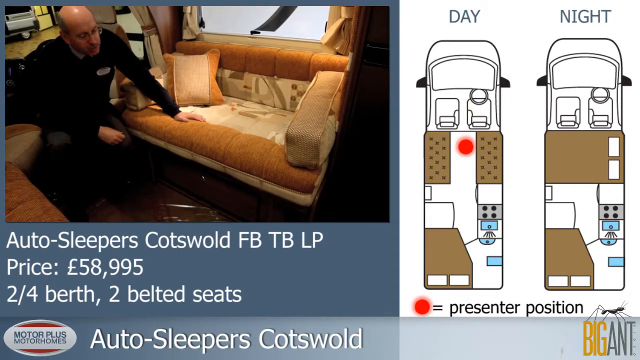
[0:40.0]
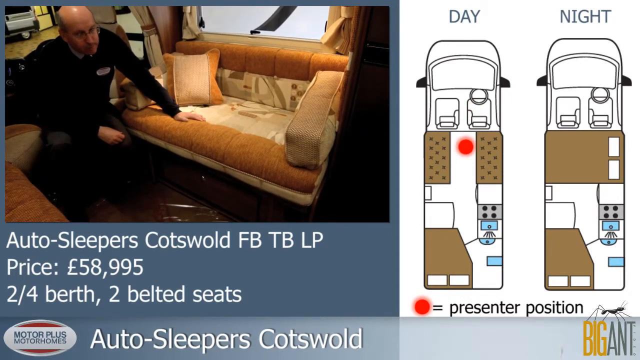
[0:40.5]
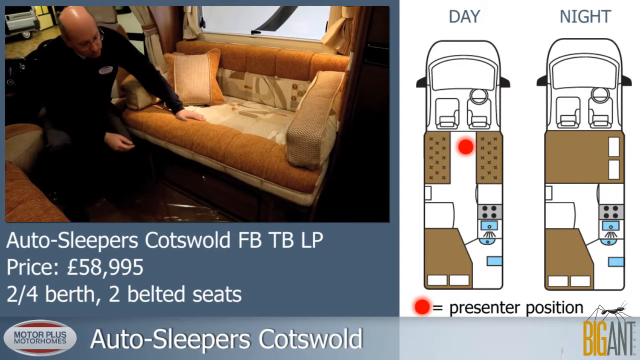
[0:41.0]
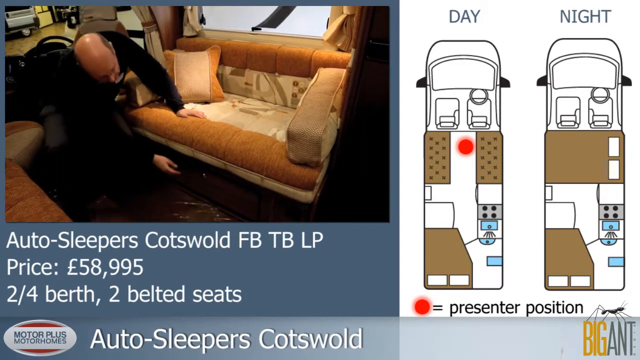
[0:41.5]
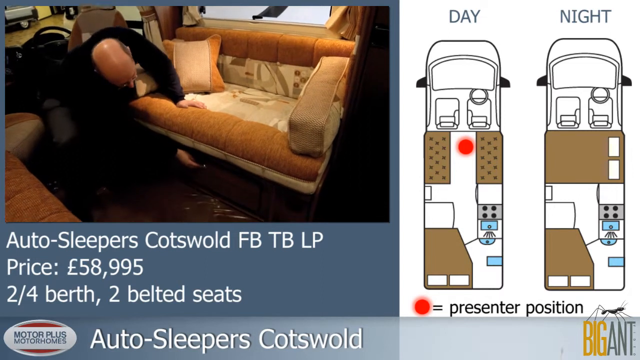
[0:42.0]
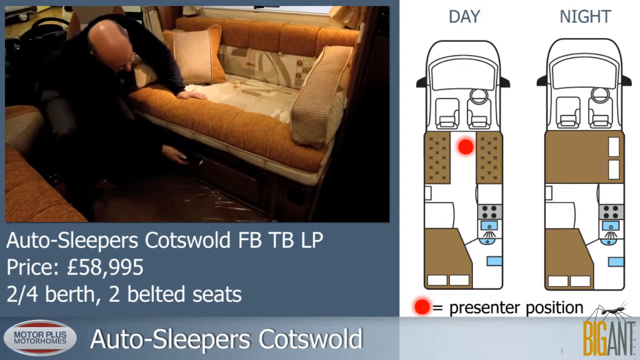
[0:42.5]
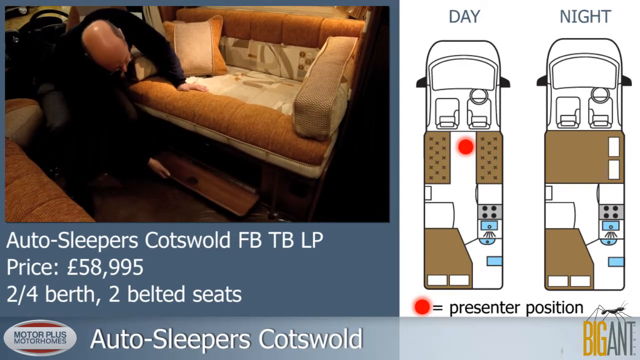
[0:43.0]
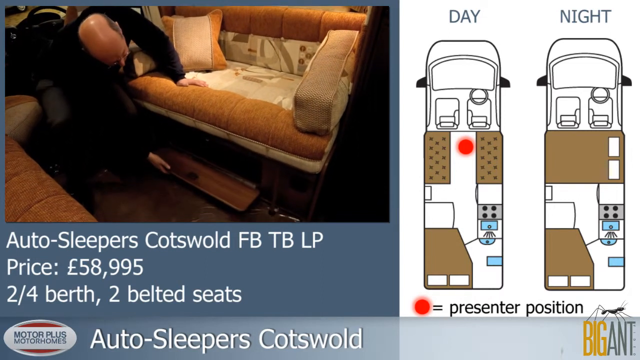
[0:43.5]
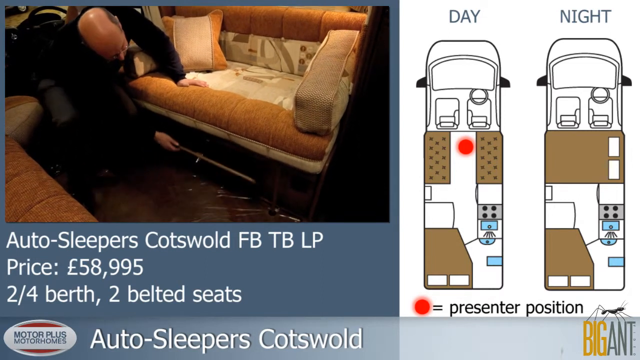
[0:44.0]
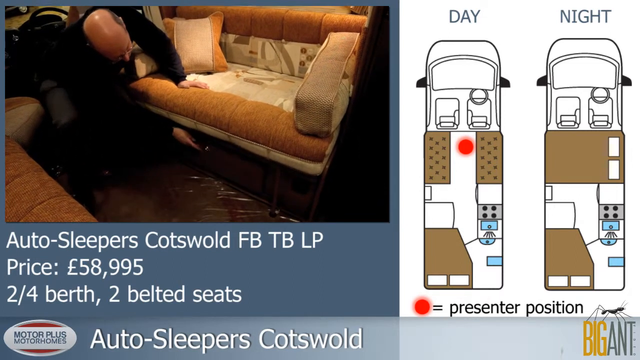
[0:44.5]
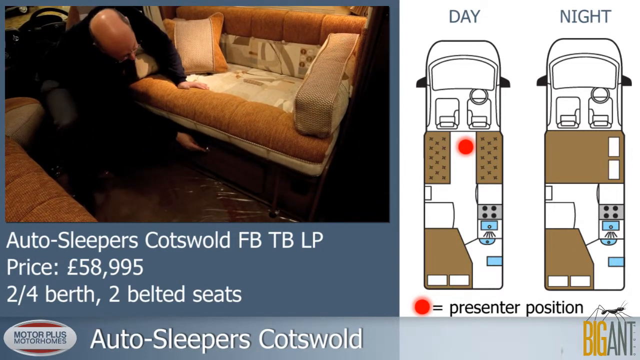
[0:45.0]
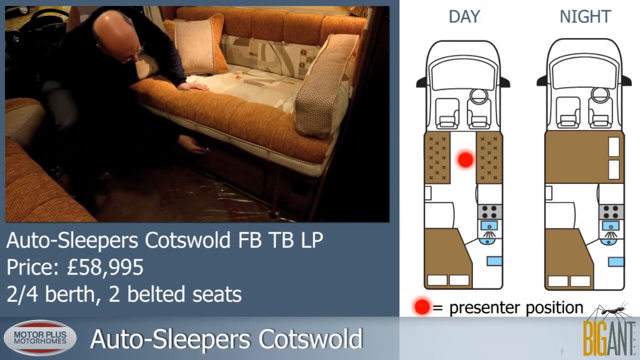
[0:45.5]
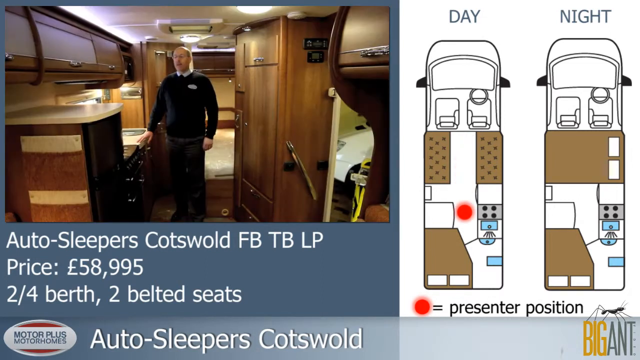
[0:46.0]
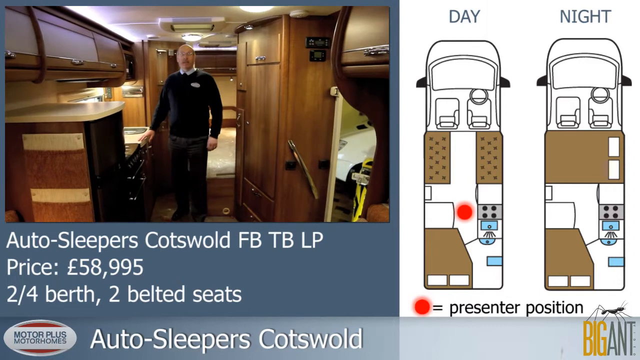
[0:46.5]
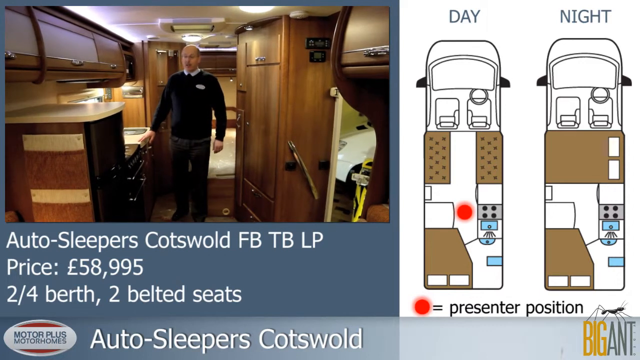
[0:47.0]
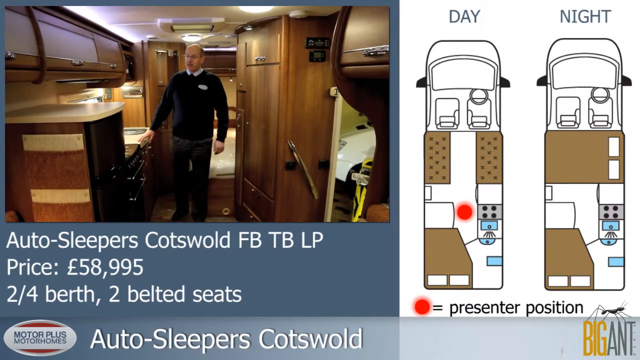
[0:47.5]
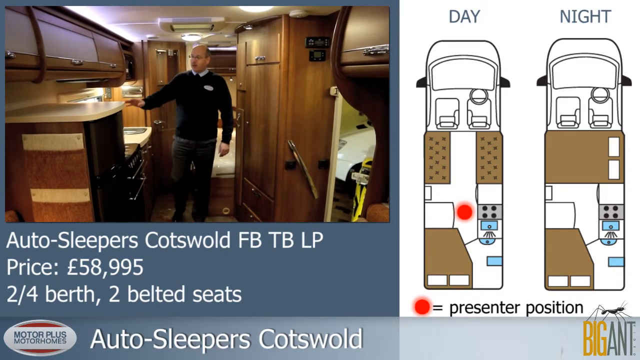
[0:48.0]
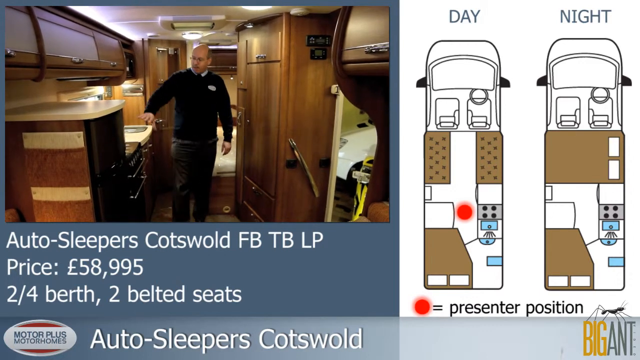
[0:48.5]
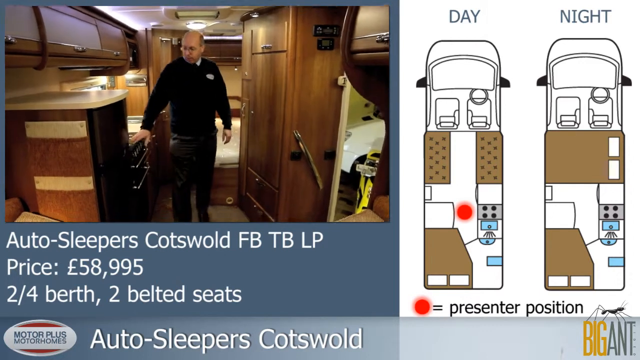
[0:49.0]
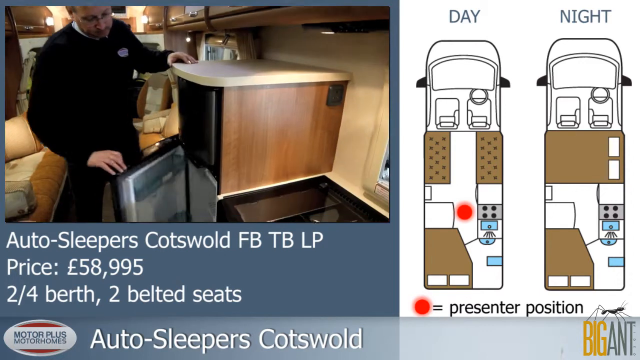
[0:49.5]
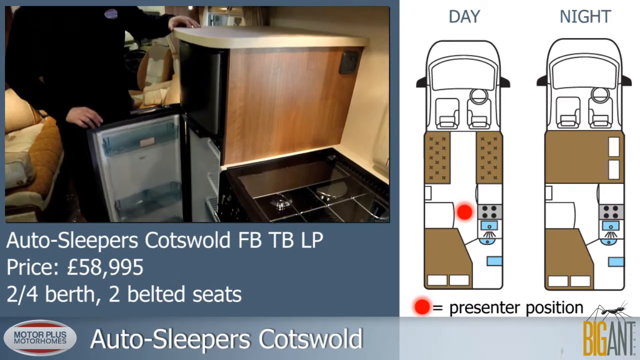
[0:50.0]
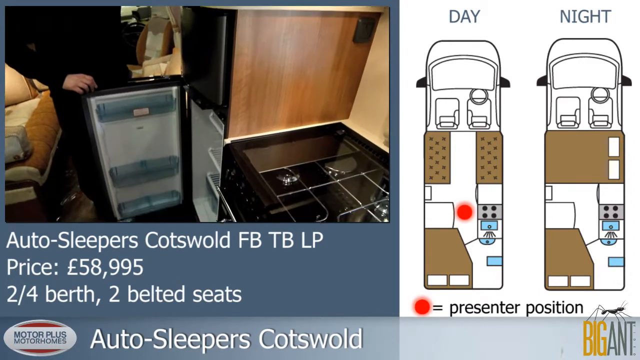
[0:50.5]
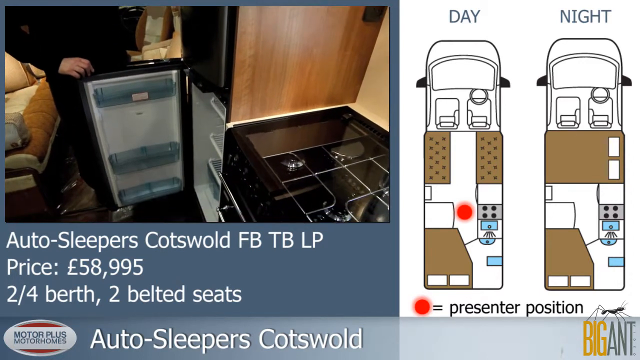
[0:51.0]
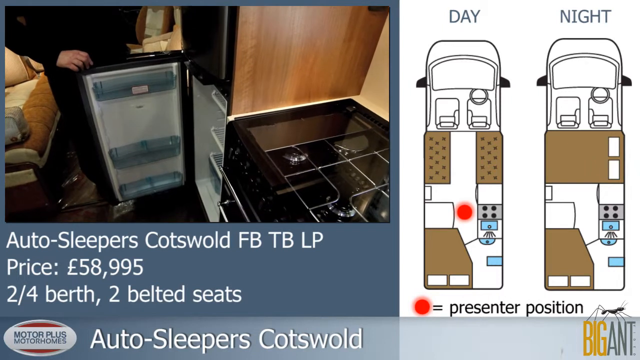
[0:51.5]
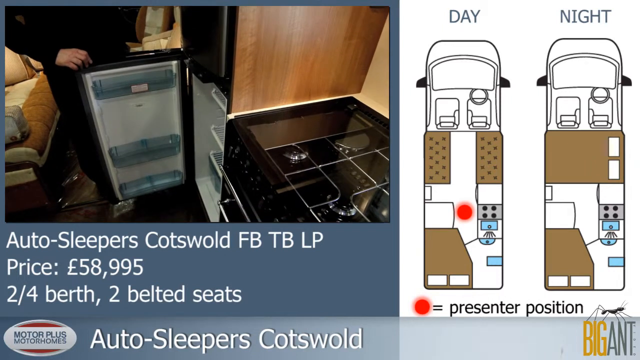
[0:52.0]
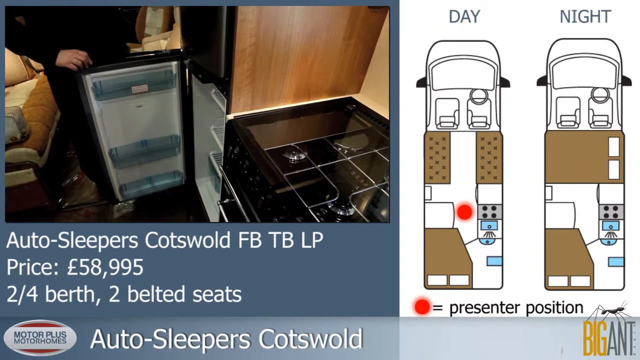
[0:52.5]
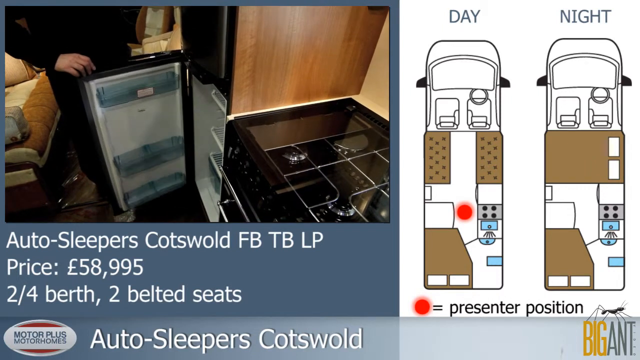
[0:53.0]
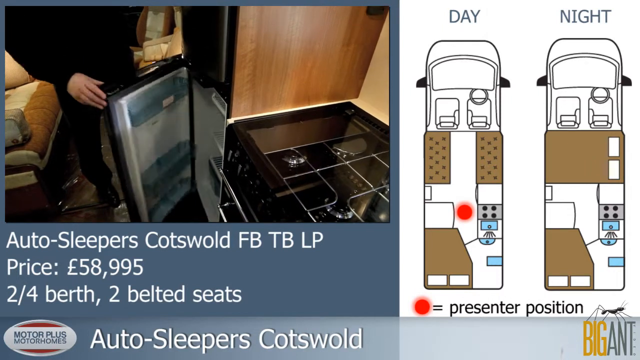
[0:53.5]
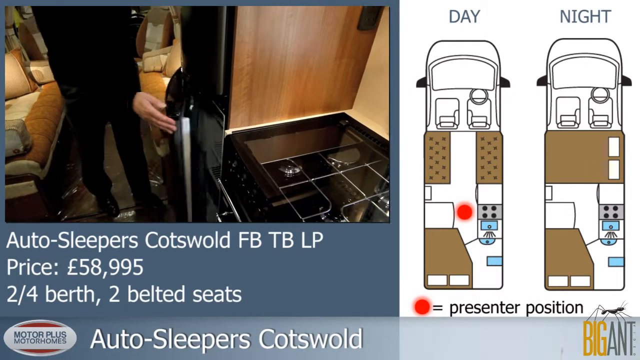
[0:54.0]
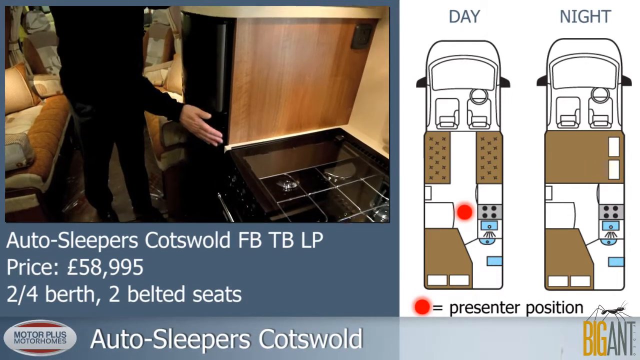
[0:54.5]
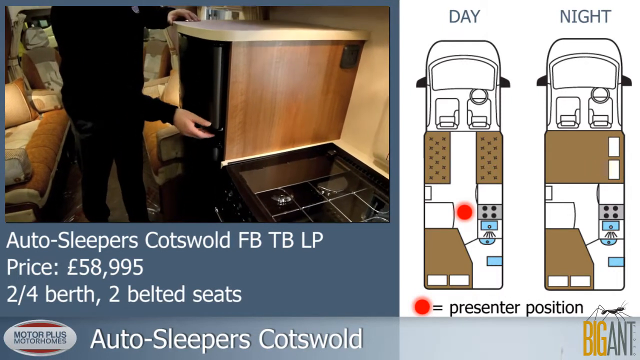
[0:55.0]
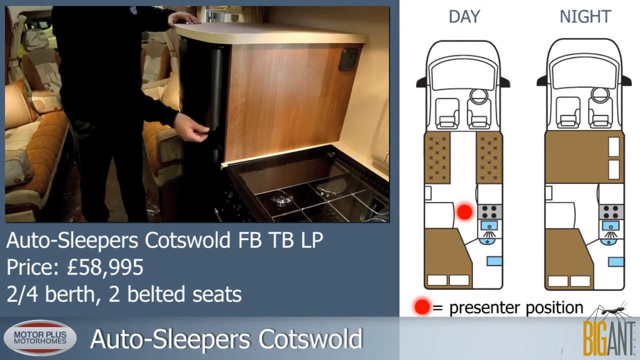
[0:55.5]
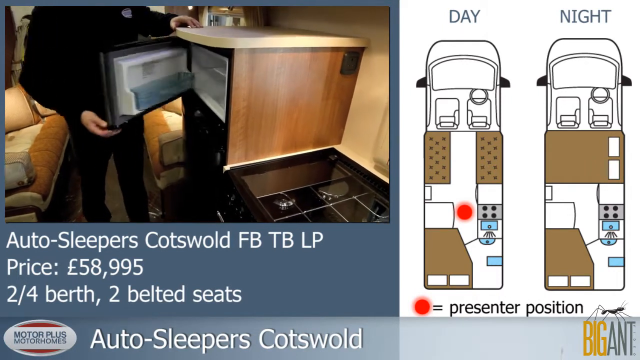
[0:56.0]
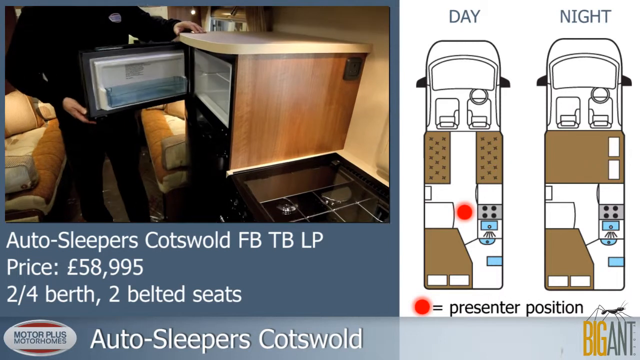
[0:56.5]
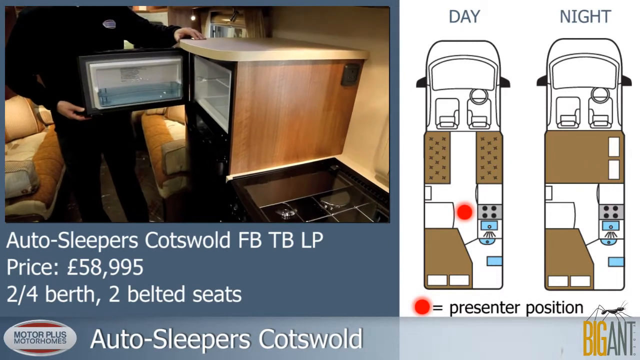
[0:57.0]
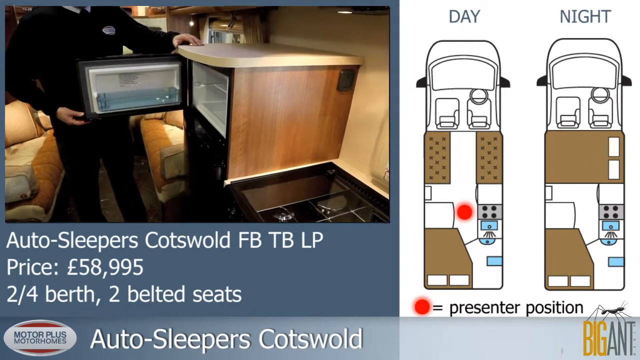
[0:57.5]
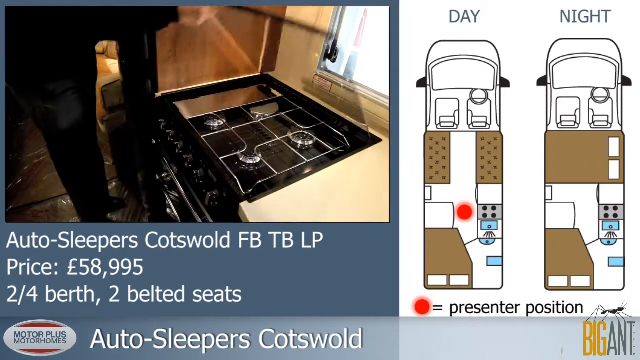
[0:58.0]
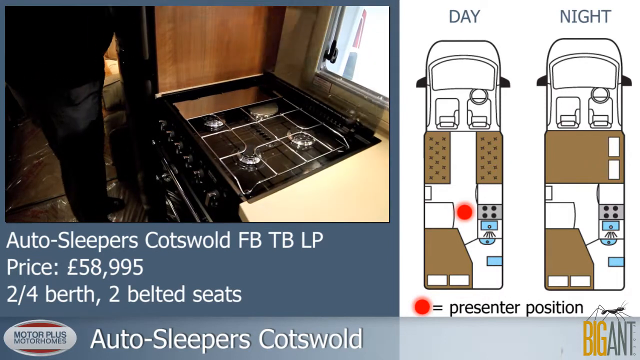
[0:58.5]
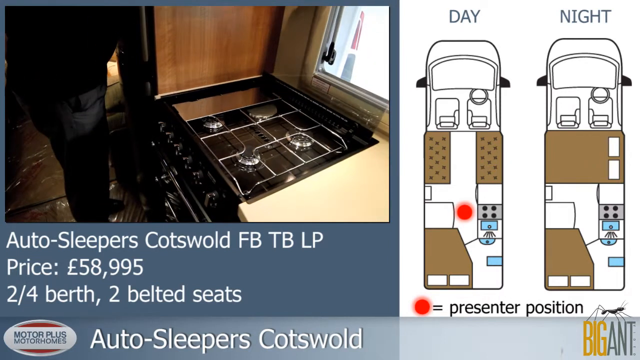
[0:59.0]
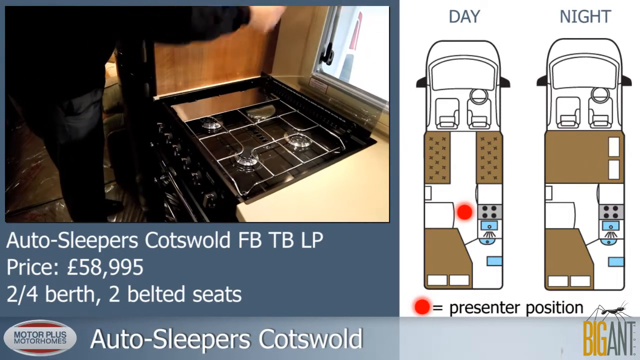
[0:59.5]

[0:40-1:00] The demonstration of converting the sofa into bedding continues. The view then faces the other direction, towards the back of the vehicle, where there is possibly a bed. There is a kitchenette with a hob, what might be a small oven, and lots of overhead storage lockers, similar to the overhead lockers on a plane. There is also a big storage area on the other side of the vehicle. The salesman can stand upright here. He shows the fridge, which is about the size of an average domestic fridge, with more of an ice box than a freezer compartment. The hob and oven are also pretty much standard size, and the vehicle appears to be quite big.